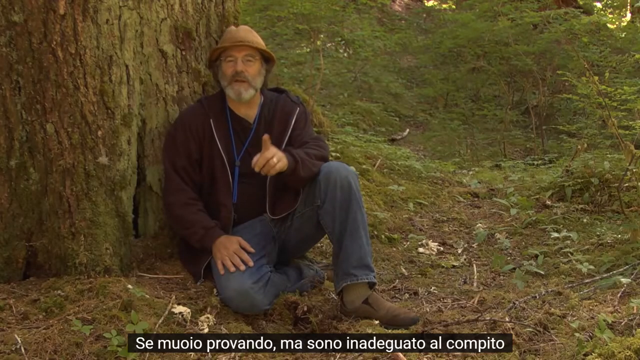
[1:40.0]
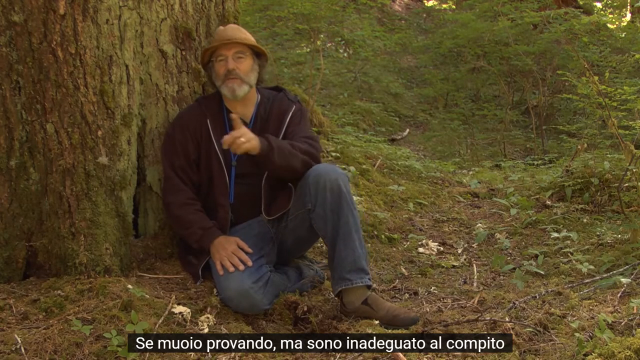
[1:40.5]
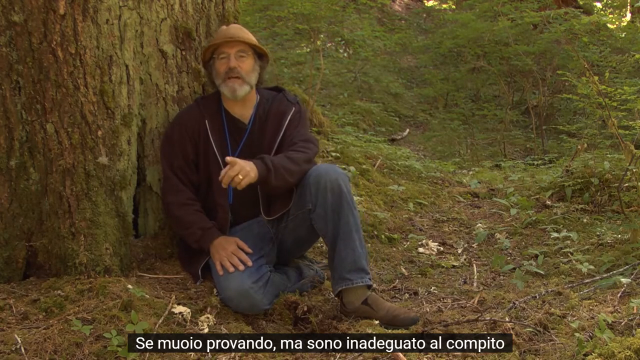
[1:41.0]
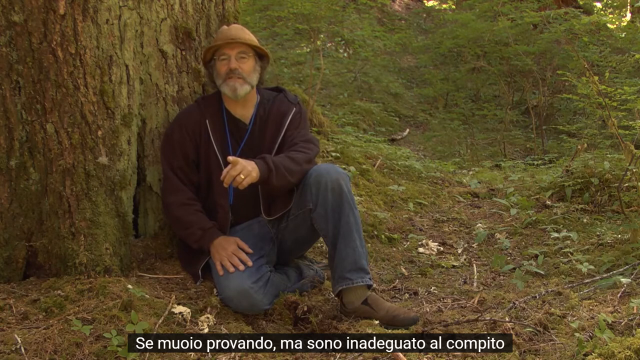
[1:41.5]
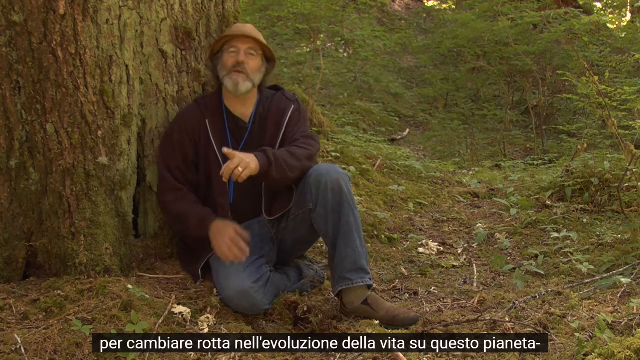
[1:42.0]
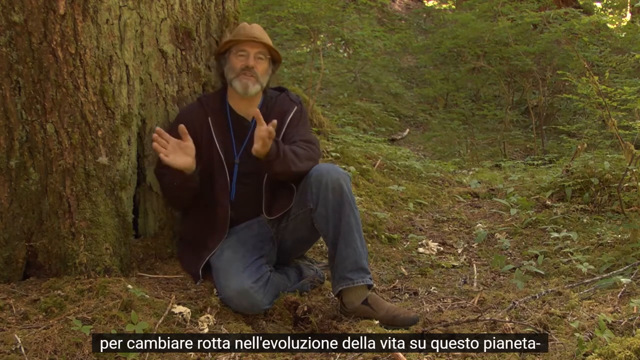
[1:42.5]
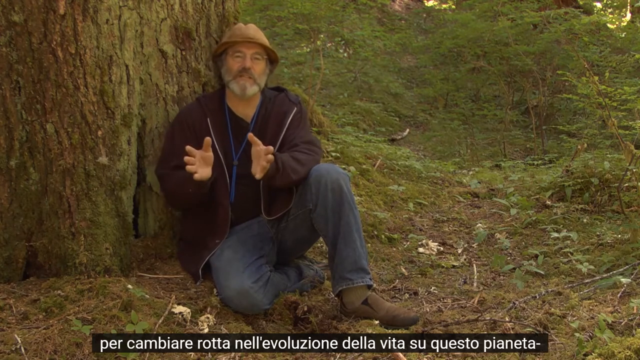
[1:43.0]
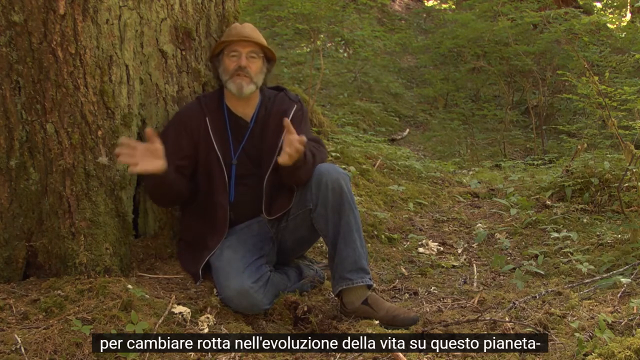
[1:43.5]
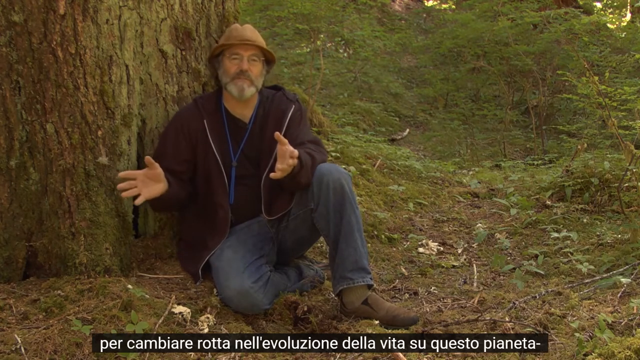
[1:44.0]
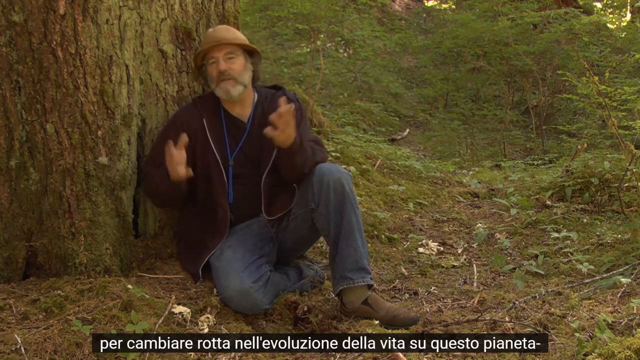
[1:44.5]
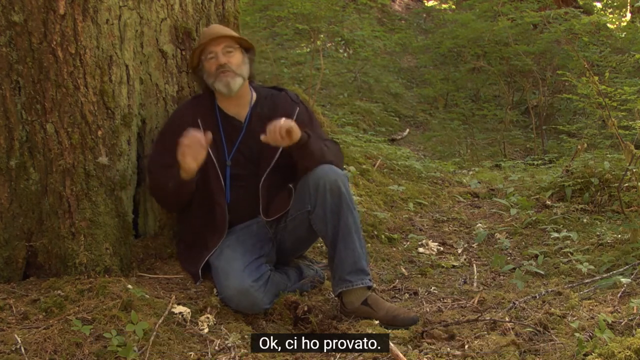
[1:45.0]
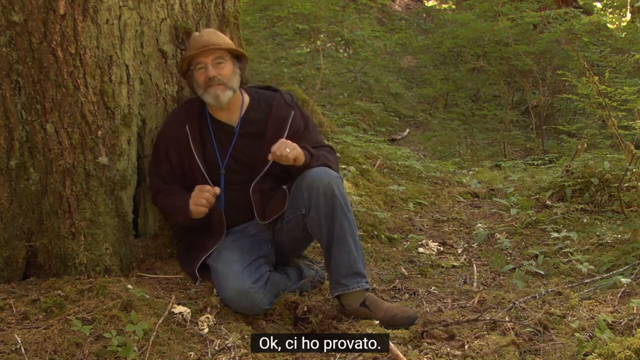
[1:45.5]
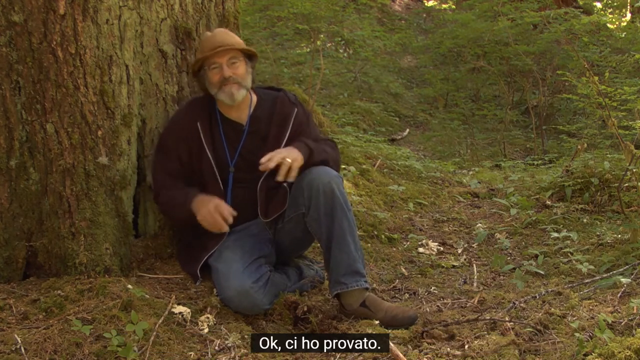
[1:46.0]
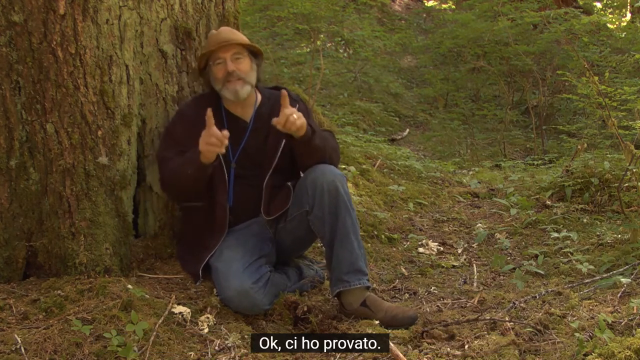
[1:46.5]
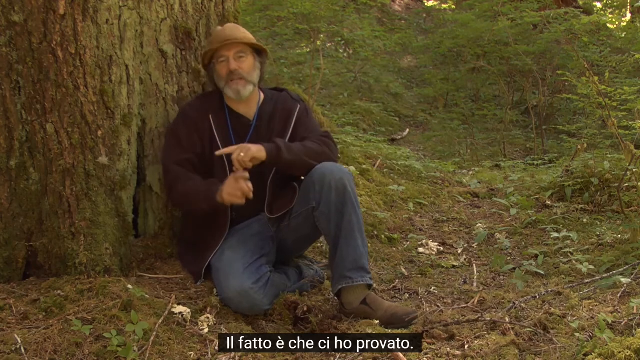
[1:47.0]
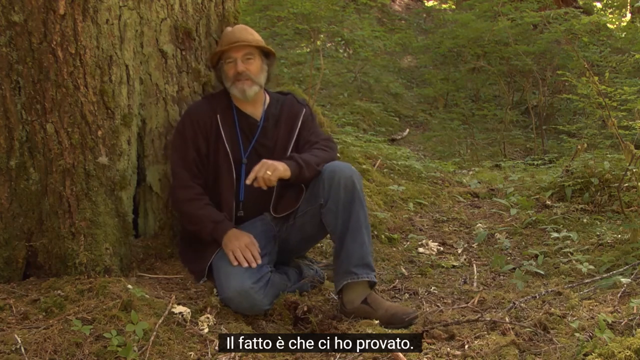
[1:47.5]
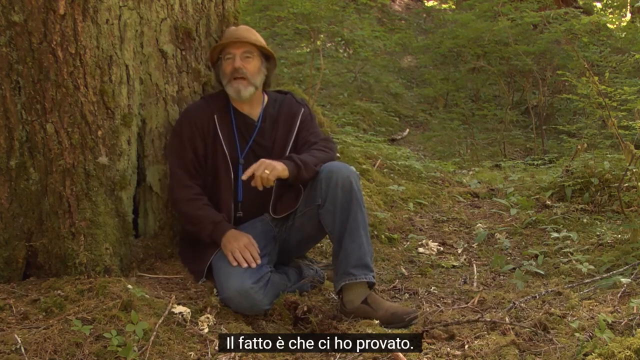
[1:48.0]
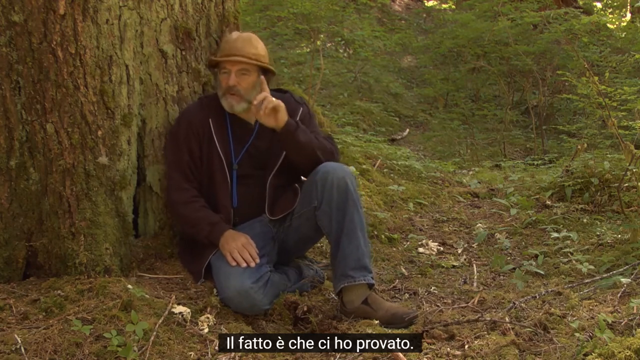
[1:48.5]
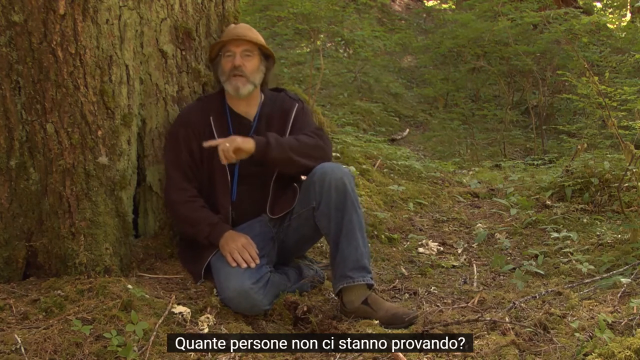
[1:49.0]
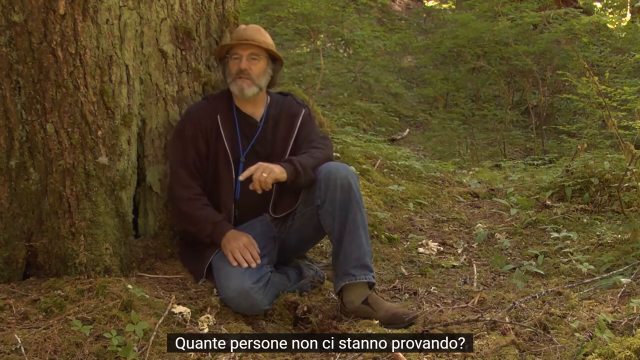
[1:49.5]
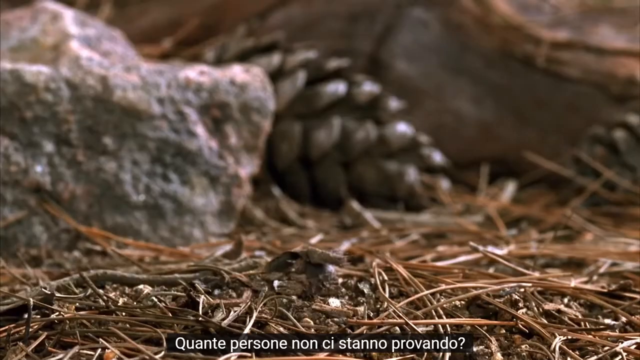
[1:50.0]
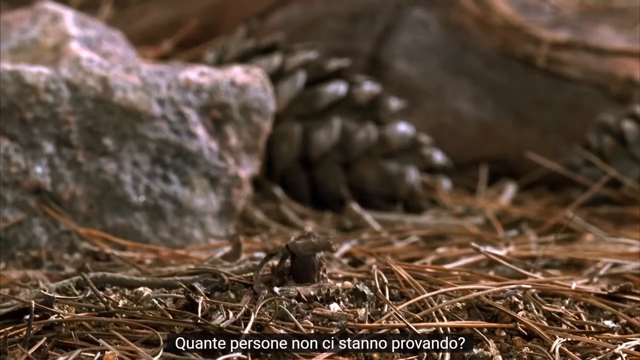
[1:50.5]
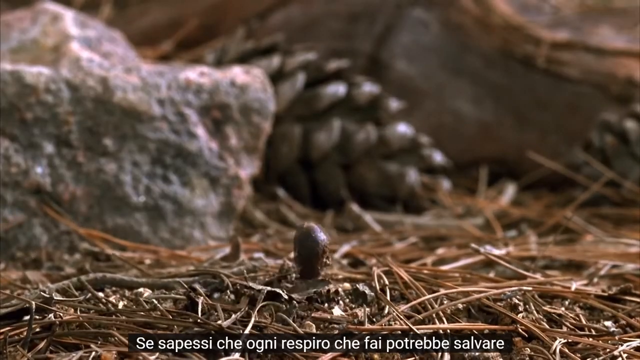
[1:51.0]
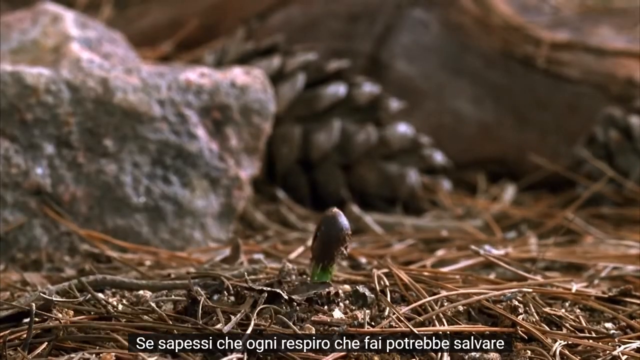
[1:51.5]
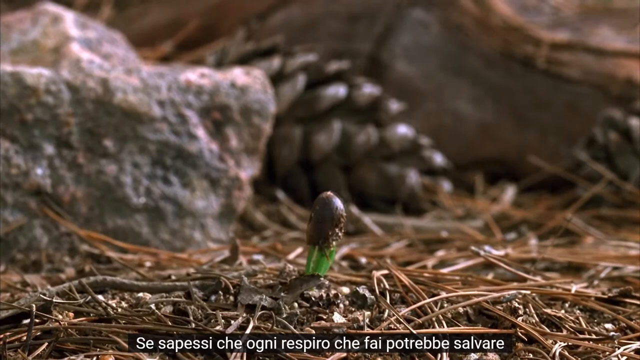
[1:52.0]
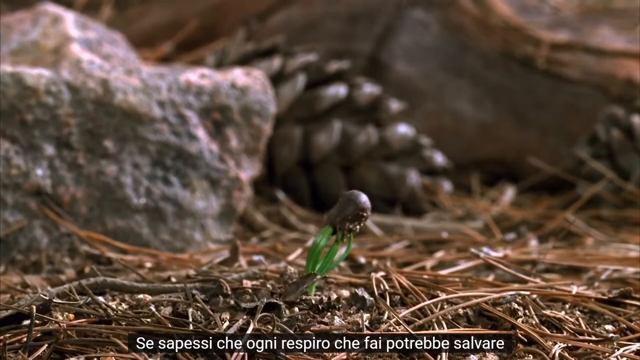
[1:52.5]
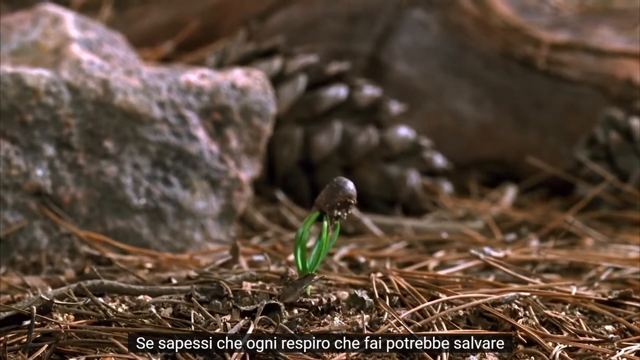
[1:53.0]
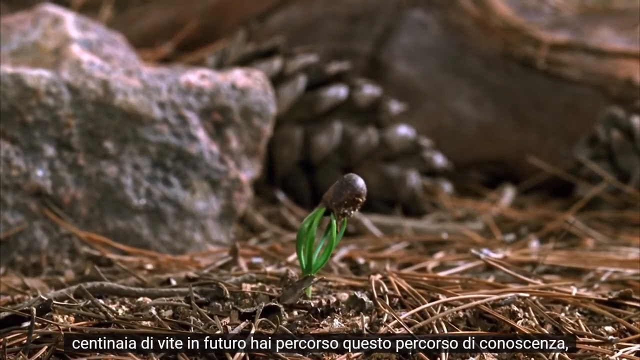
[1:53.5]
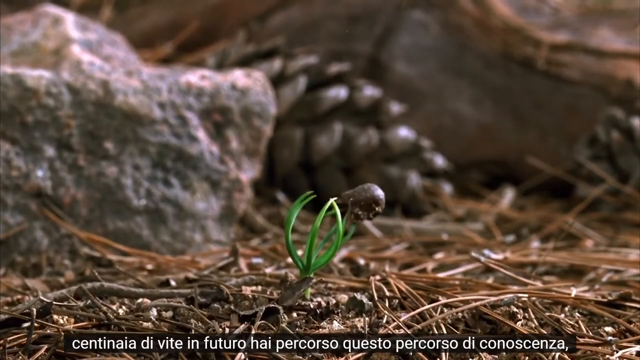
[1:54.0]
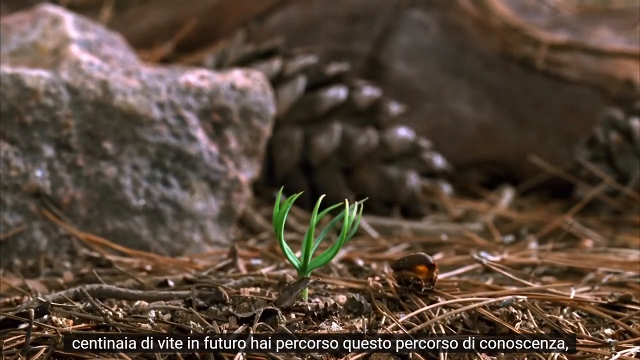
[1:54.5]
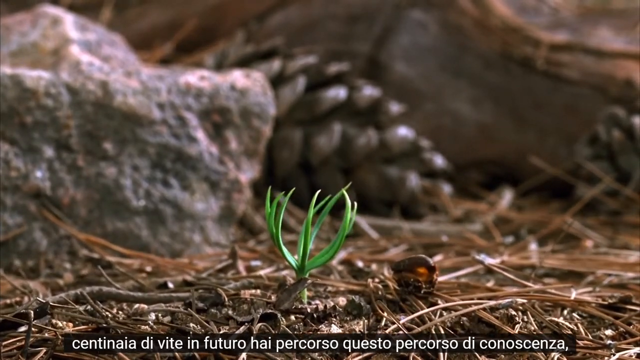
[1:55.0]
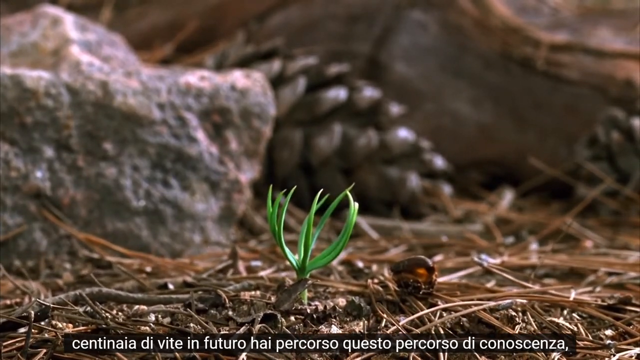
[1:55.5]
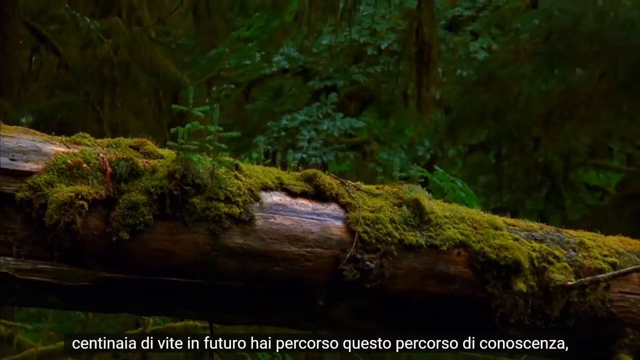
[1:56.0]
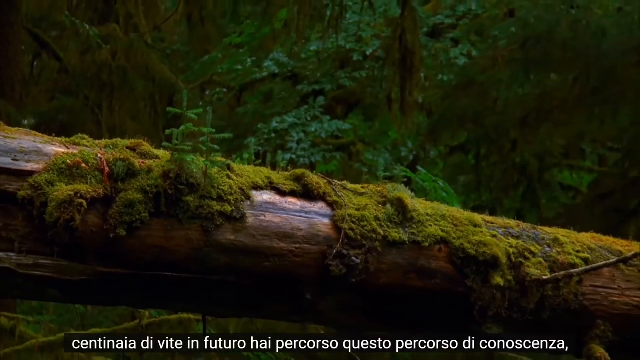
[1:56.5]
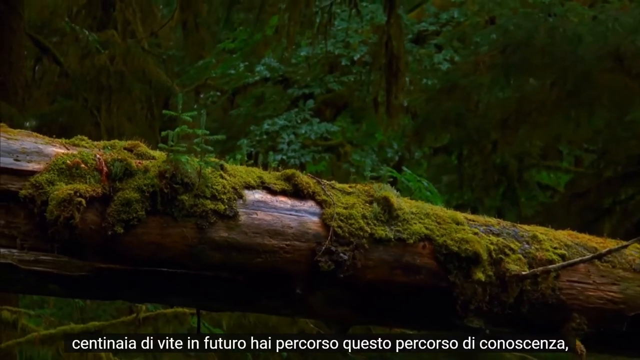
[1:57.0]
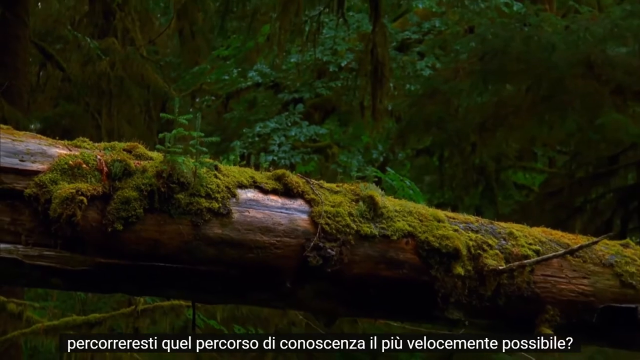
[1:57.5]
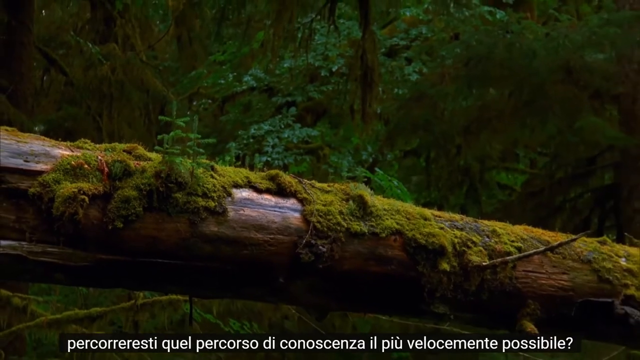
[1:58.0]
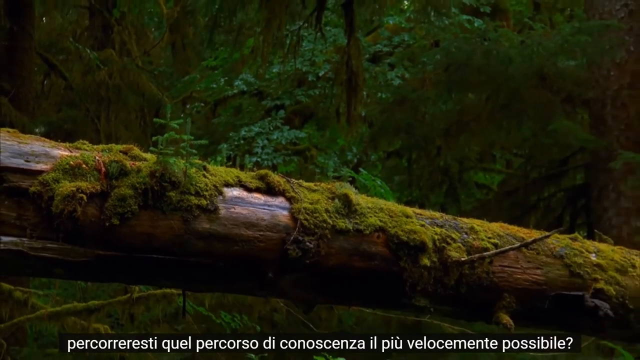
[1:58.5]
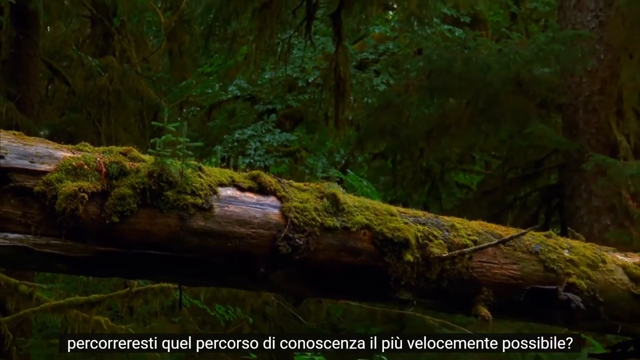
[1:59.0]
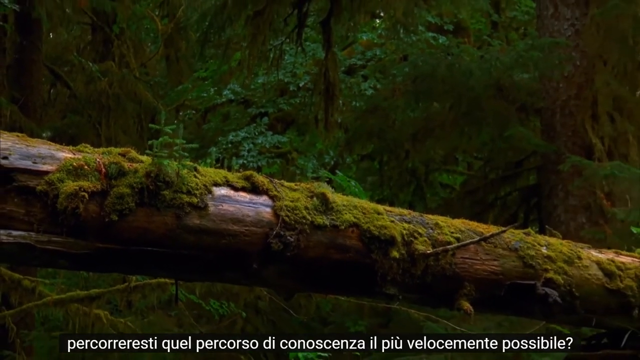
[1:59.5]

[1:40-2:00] Paul Stamets rests against a tree trunk that is maybe a third of the width of the video and about 90 percent of its height, on the left-hand side, with ground making up the rest at the bottom. To the right is a forest scene with a slight path leading upwards that is difficult to distinguish from the rest of the foliage, with leaves and small plants behind to the right. He wears a blue top and sits on his right leg, which is folded underneath him, leaning on his right side against the tree. He moves both hands as he starts to talk and becomes a little more animated, smiling. The video cuts to a scene with a rock on the left-hand side, taking up maybe a third of the screen's width and most of its height, higher at the top left and becoming smaller towards the right. A pinecone lies left to right behind it, partially obscured, and appears to be open. Behind that is a rock with a branch at the top left of the screen, and a pinecone at the base of that rock, of which very little is seen. Twigs are on top of earth, and a brown cap is pushed upwards by four or five what appear to be leaves, which unfurl slightly, moving the cap to the right until it falls off. The video then cuts to a scene that starts zoomed in and zooms out, showing a tree that has fallen but has not hit the ground, running from the center left to the bottom right of the video. It is a brownish-grey trunk covered in moss at the top, while the bottom is bare trunk. The moss is uneven and patchy, so more of the trunk shows on the left, center left and center right. Trees are behind, but the forest floor is not visible as the camera zooms out.